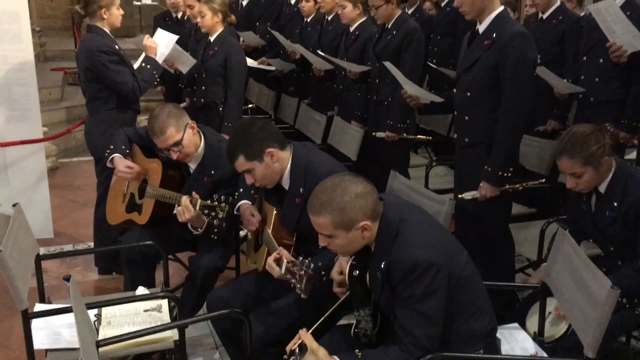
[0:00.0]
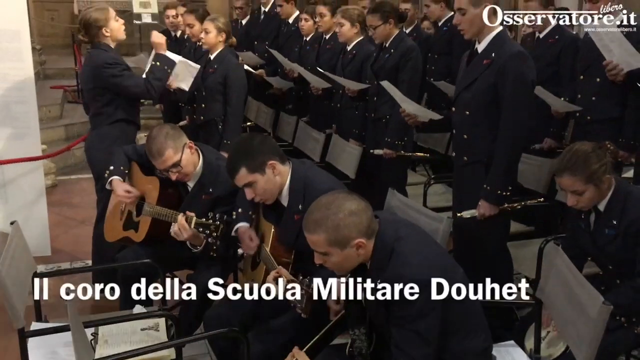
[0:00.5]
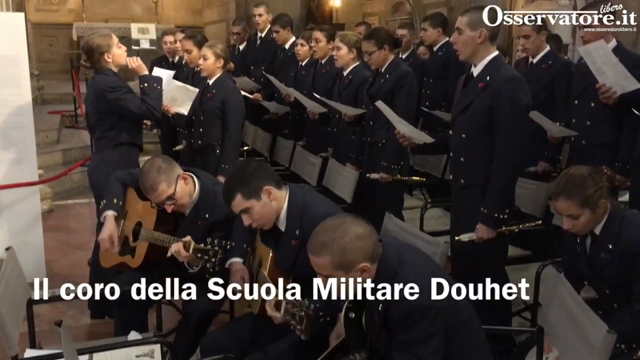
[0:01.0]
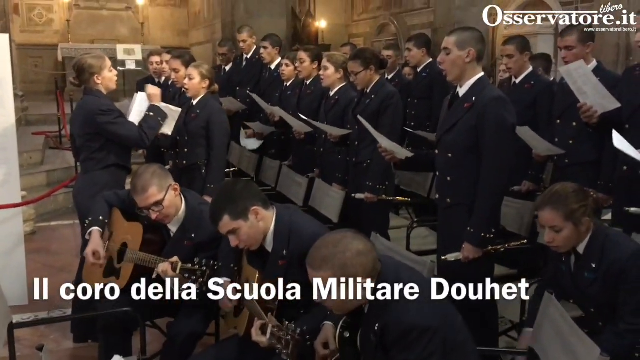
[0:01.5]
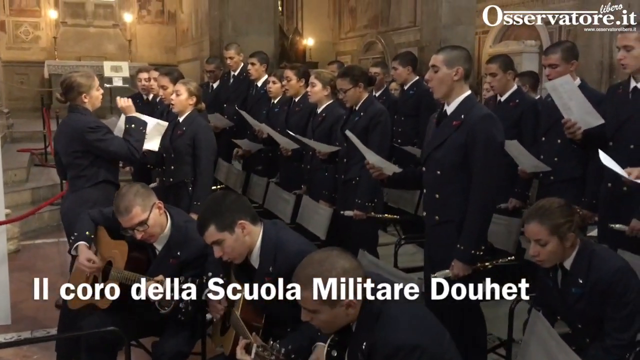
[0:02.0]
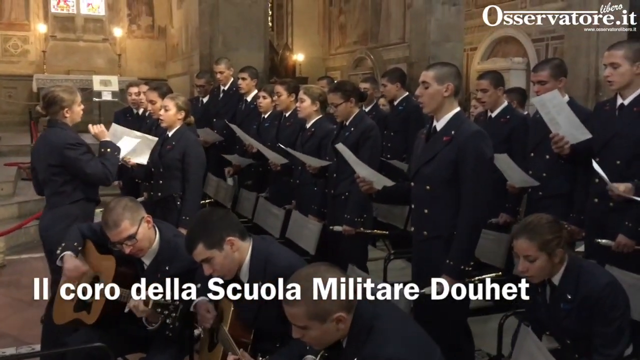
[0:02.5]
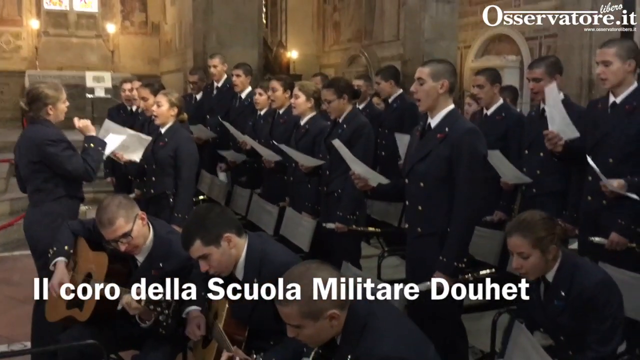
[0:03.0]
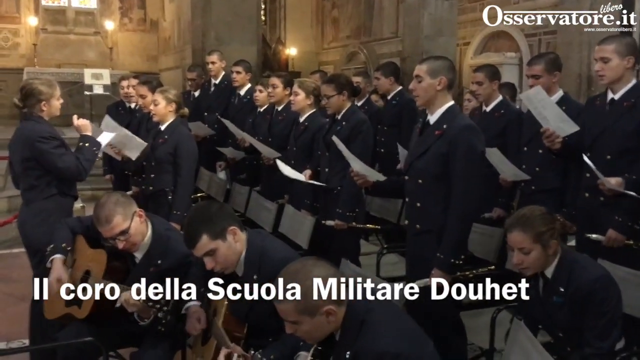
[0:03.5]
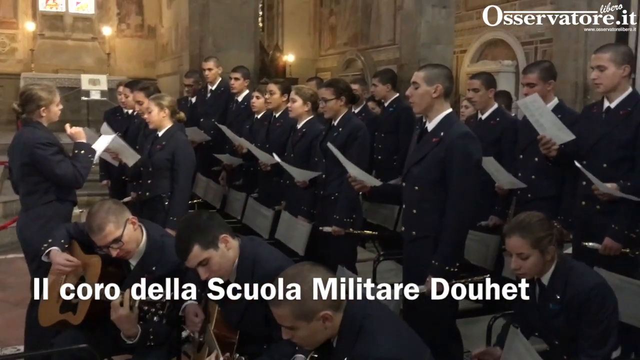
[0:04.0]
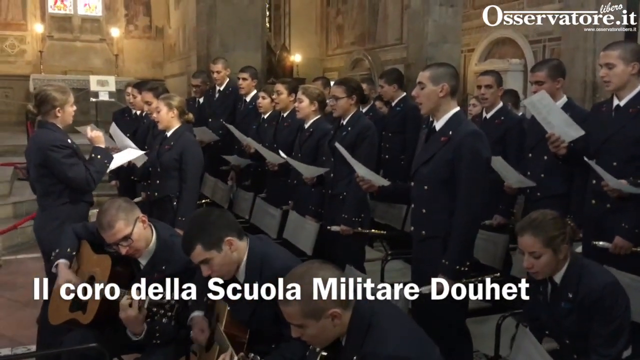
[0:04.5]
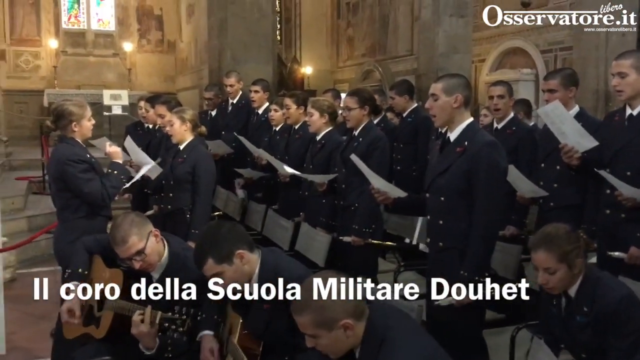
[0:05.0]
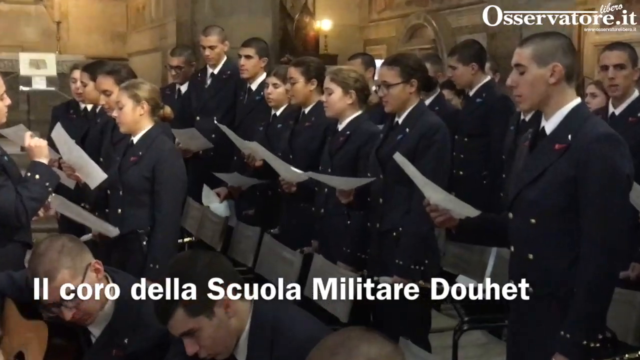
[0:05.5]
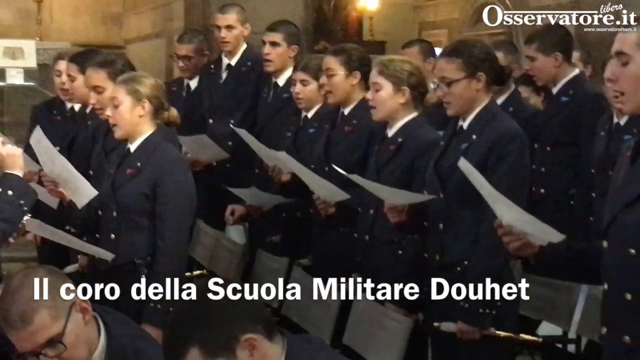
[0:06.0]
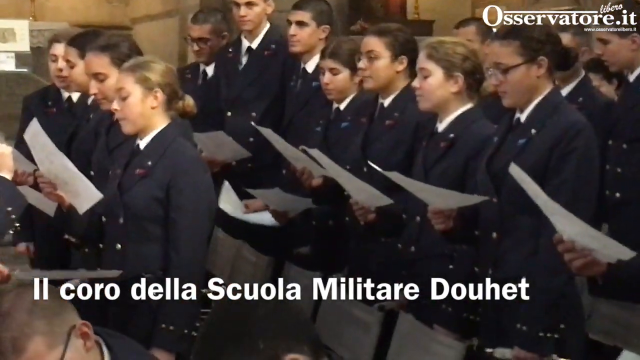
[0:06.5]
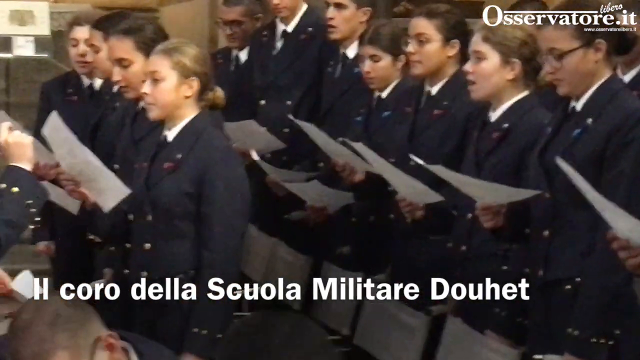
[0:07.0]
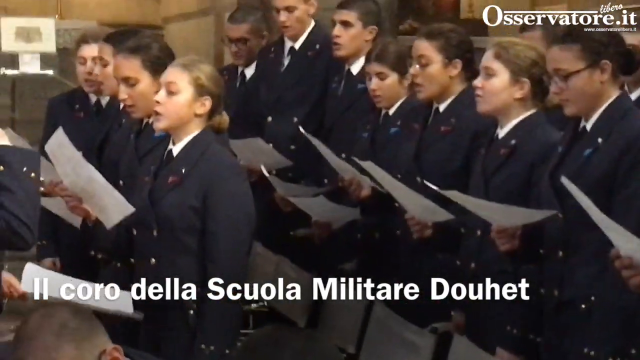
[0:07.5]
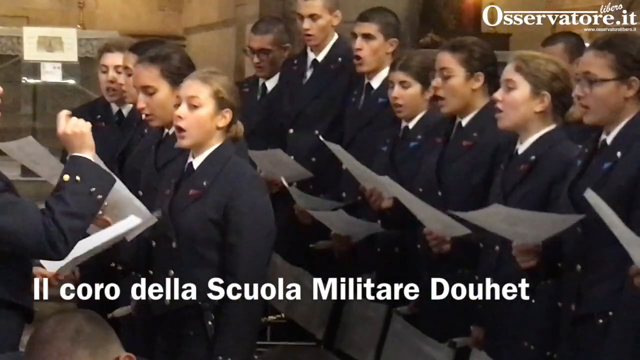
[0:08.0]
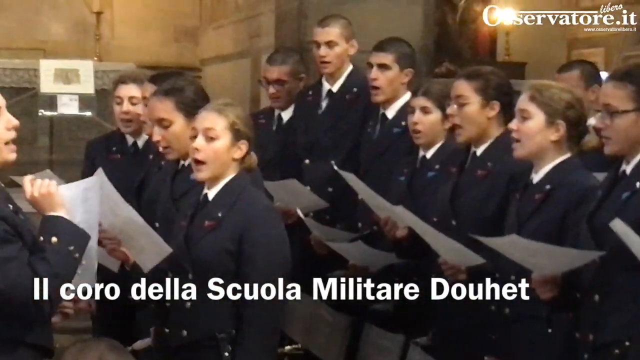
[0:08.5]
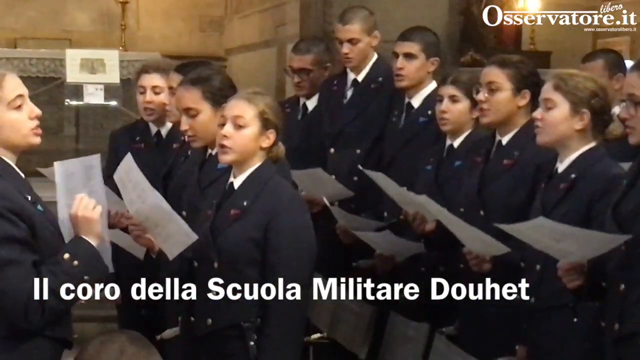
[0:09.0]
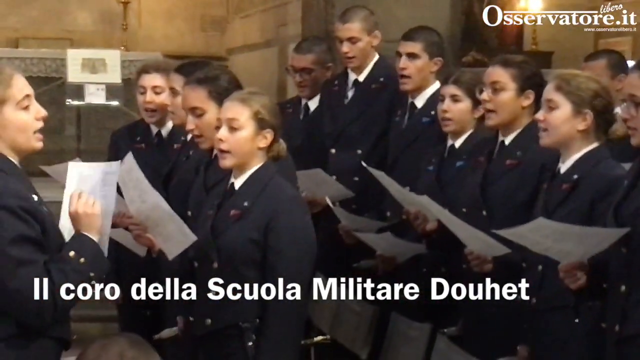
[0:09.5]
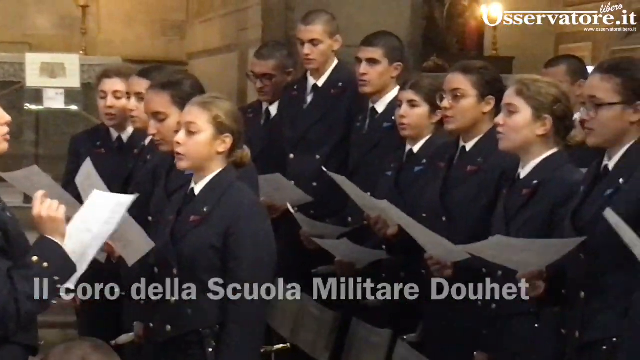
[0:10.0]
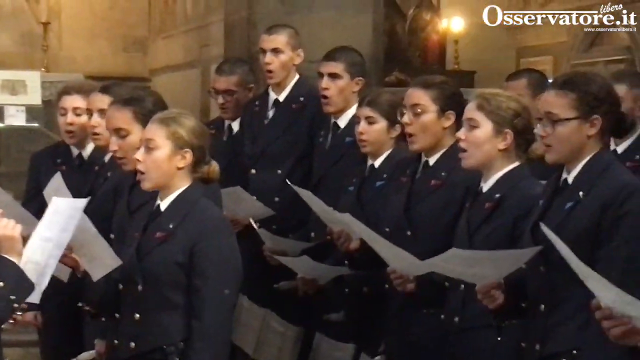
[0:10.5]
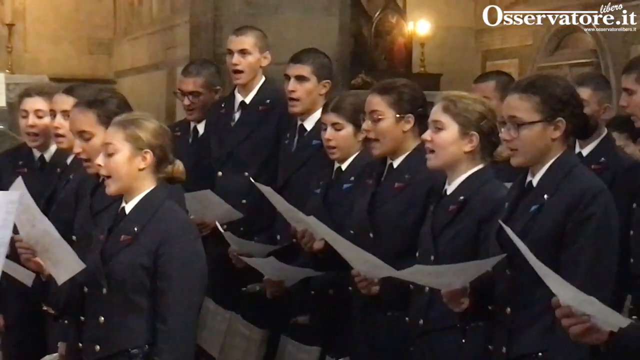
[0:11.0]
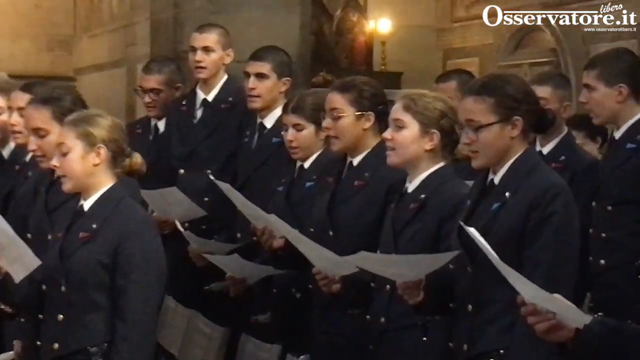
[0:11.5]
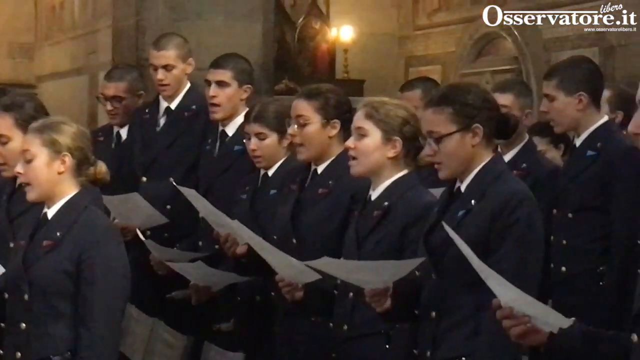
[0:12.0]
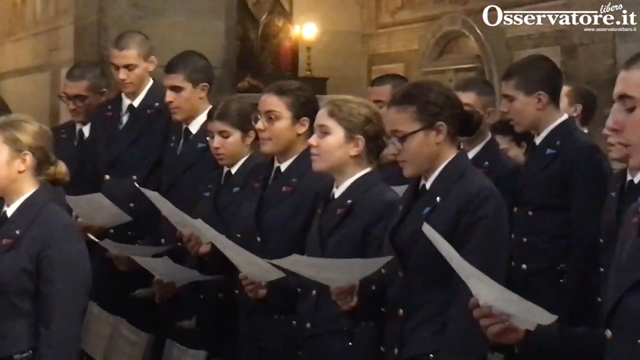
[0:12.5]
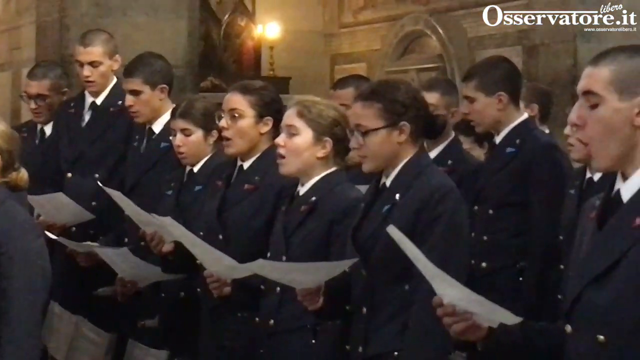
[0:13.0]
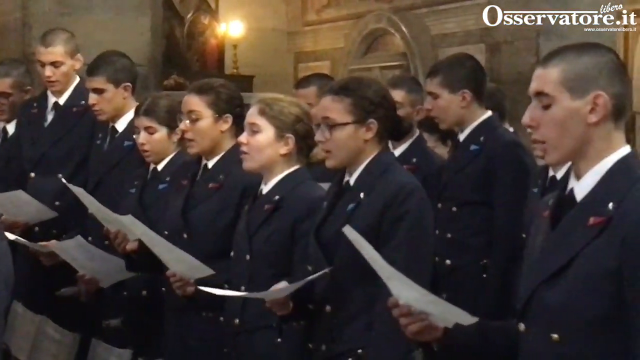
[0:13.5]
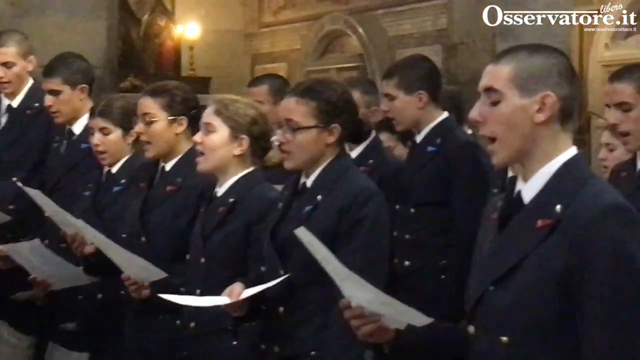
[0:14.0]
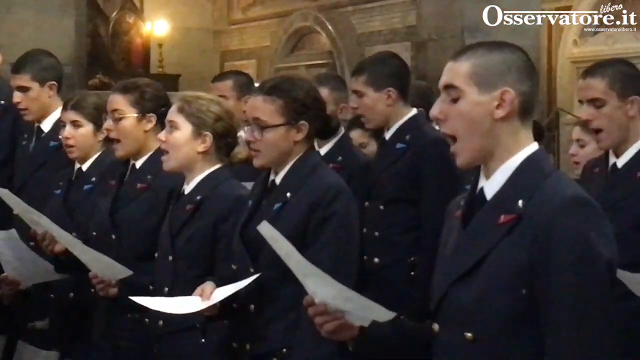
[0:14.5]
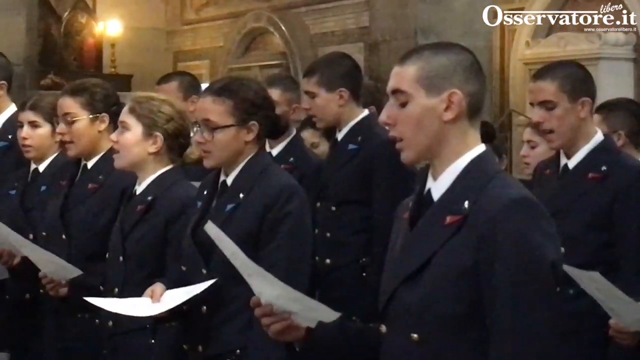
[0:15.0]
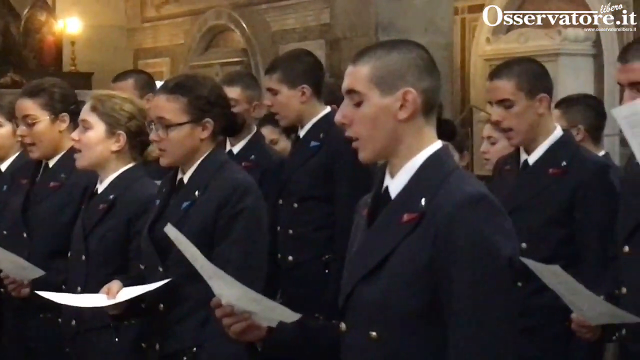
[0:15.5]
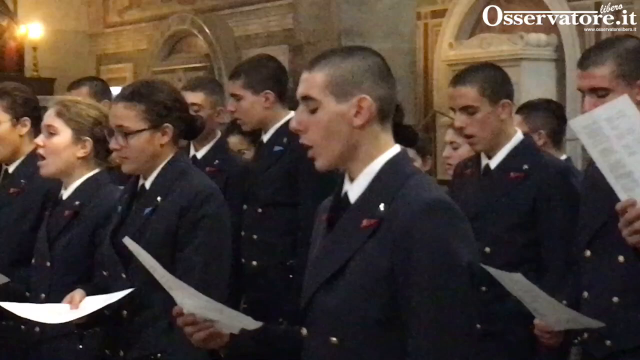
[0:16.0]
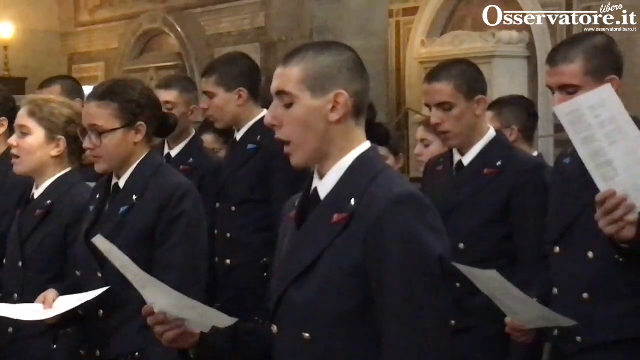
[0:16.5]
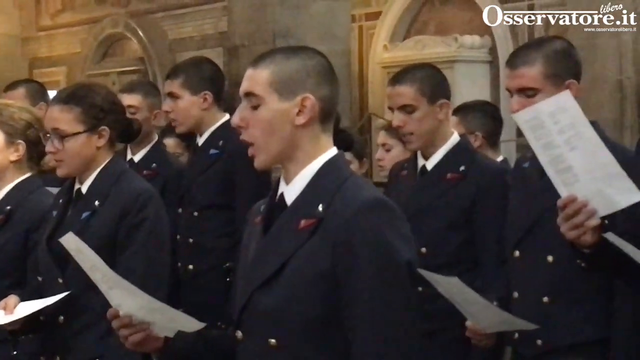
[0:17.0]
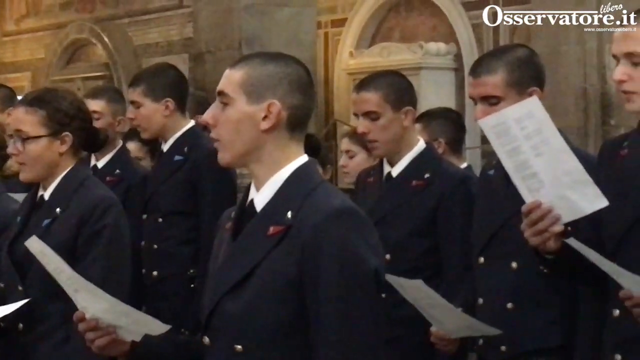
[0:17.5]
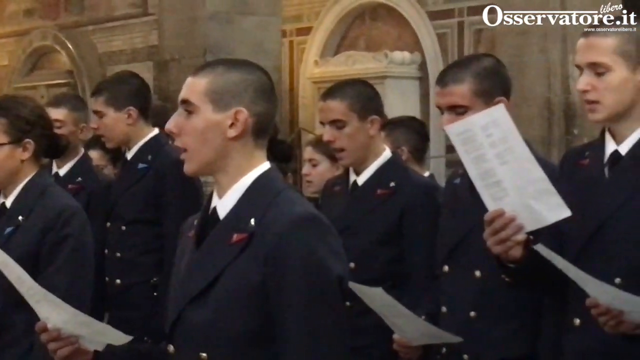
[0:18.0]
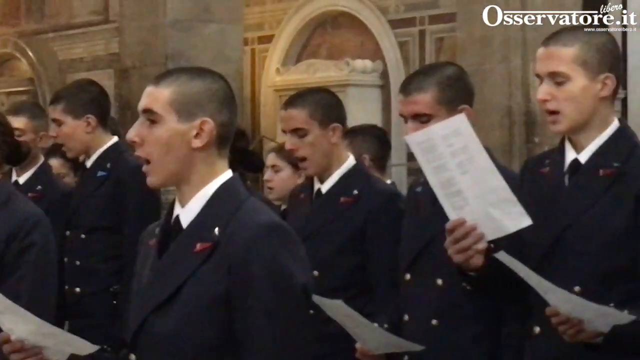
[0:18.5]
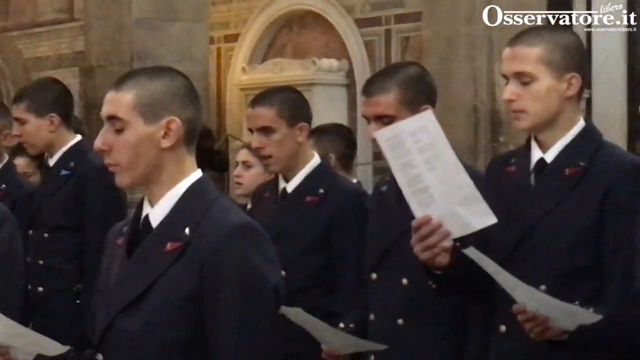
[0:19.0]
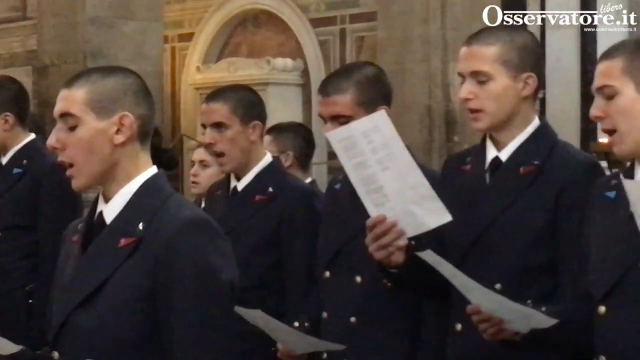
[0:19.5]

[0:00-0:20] A group of musicians performs, dressed in suits; it looks like a conglomerate, perhaps a choir. Many of them, males and females, stand and sing while holding sheet music, and lyrics can be seen as they sing. In the foreground, three male musicians strum acoustic guitars, and a female appears to be tapping on a percussion instrument, though the focus is on the singers. To the left, a director leads the choir. The musicians seem to be wearing blue suits with white shirts and ties. They are performing in what looks like some sort of cathedral, with a lot of stone and granite and some etchings like those seen in a church. The lighting is sparse, and the majority of the singers seem to be Caucasian.